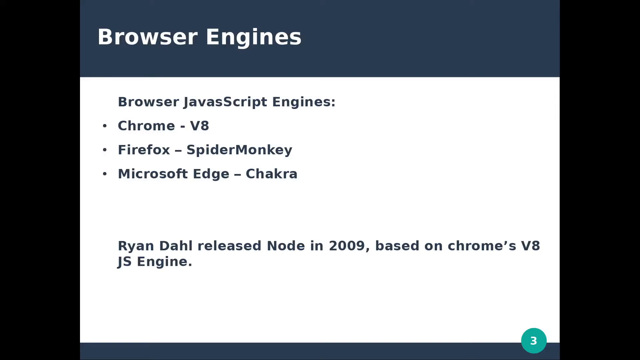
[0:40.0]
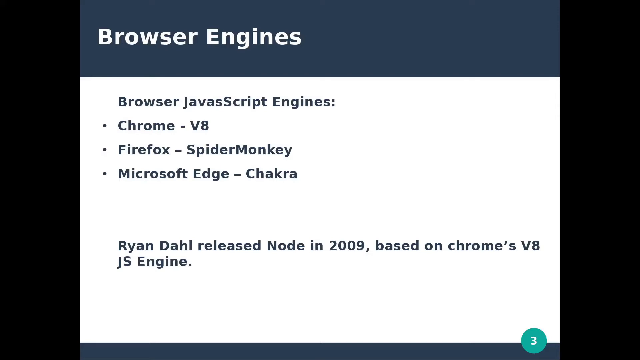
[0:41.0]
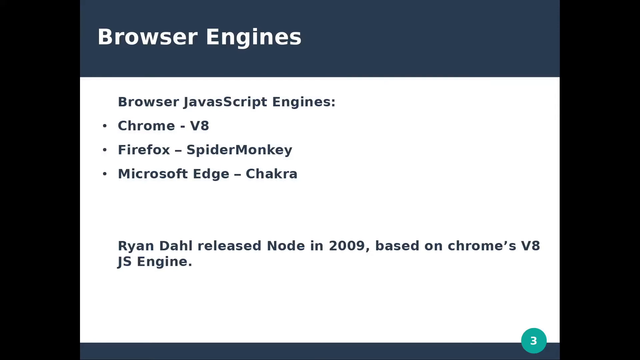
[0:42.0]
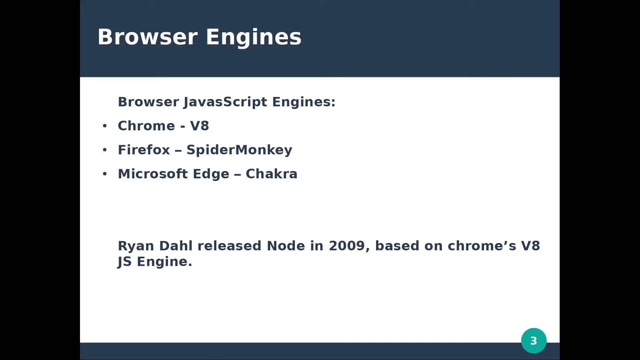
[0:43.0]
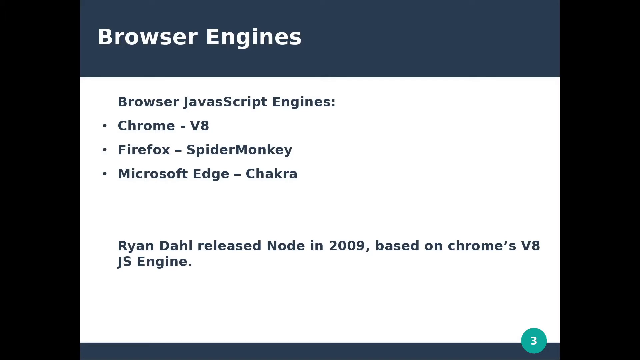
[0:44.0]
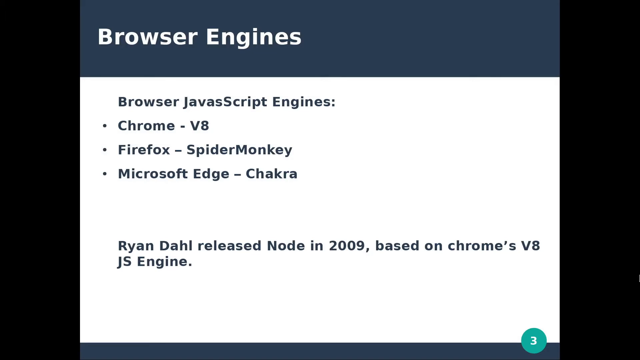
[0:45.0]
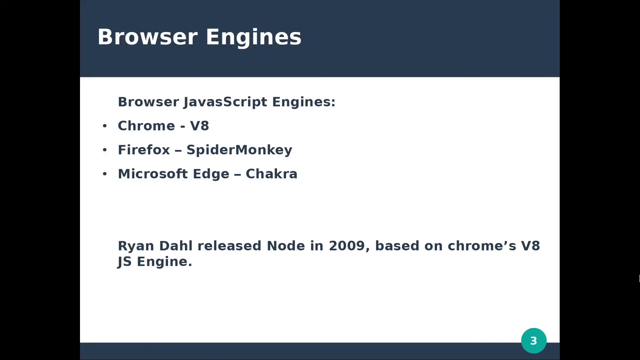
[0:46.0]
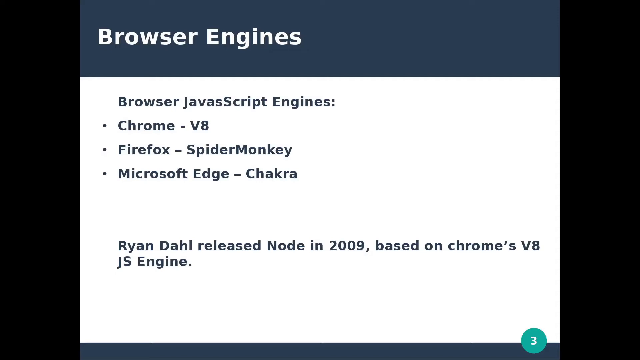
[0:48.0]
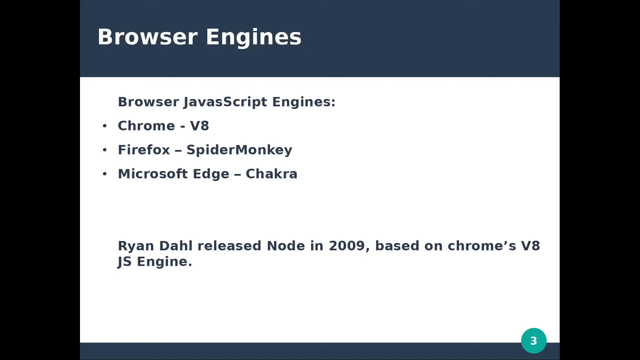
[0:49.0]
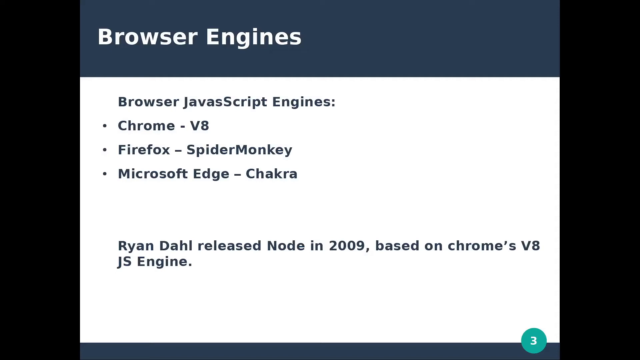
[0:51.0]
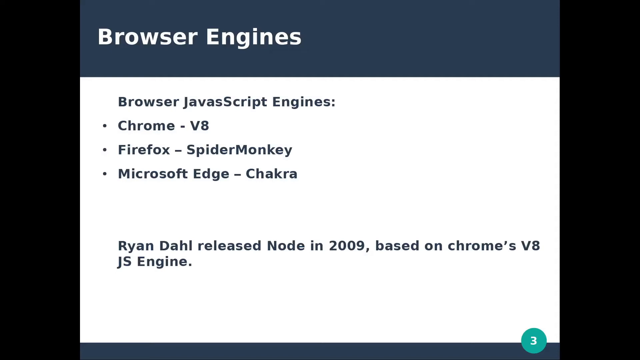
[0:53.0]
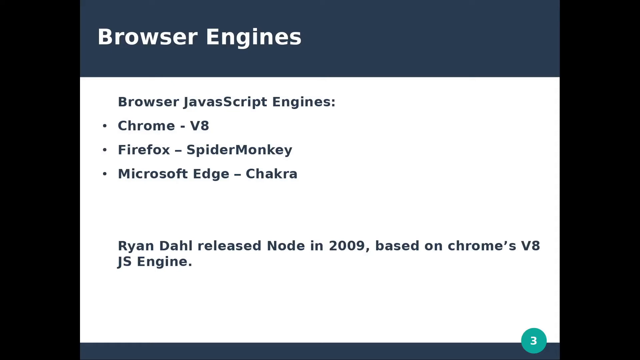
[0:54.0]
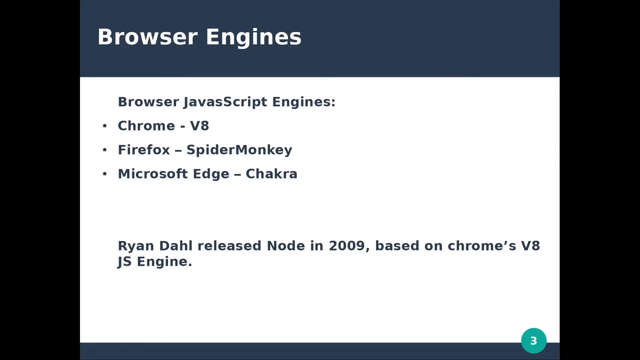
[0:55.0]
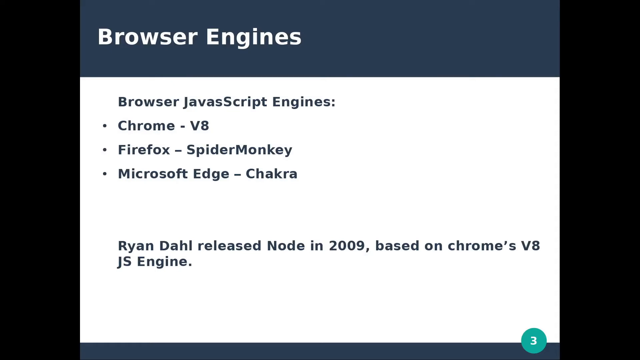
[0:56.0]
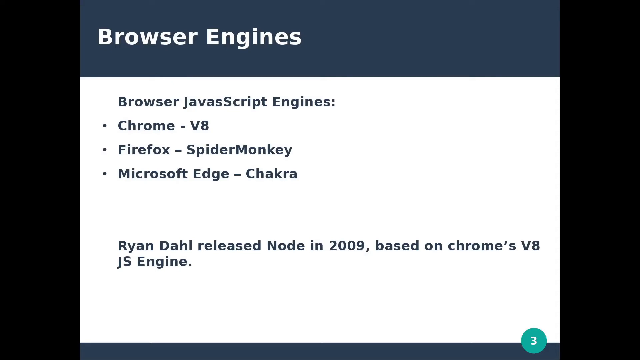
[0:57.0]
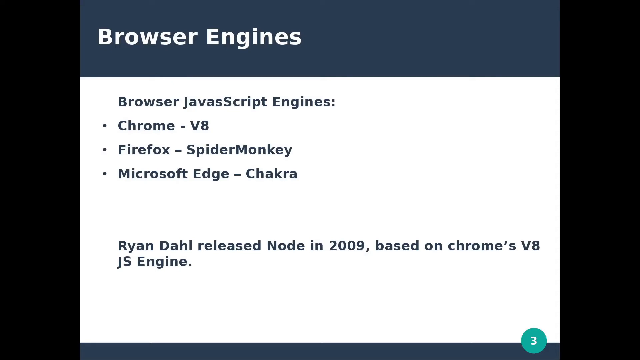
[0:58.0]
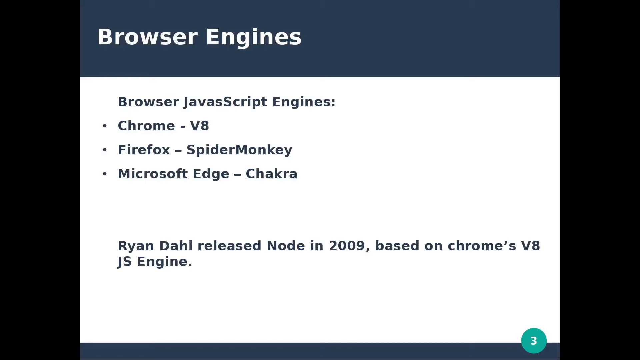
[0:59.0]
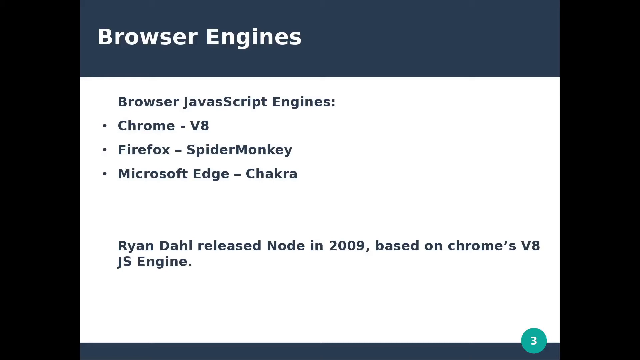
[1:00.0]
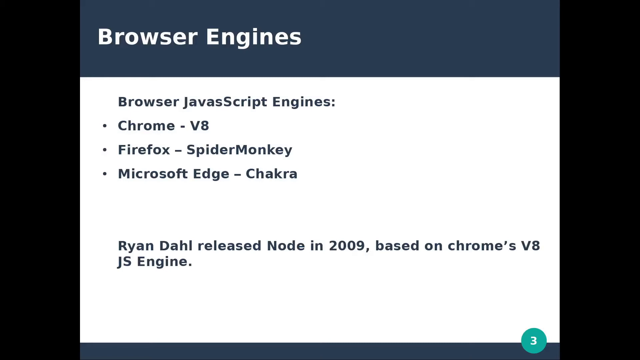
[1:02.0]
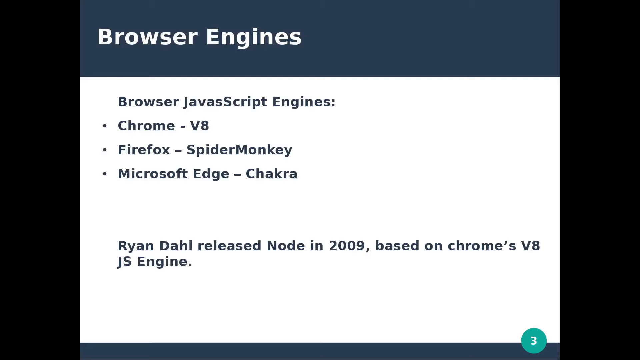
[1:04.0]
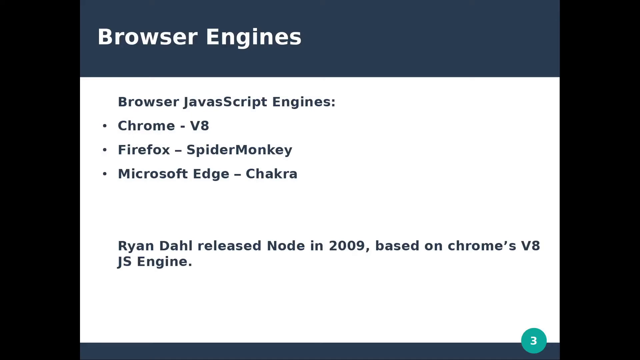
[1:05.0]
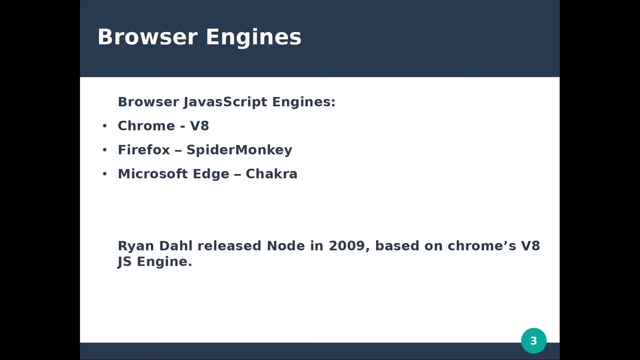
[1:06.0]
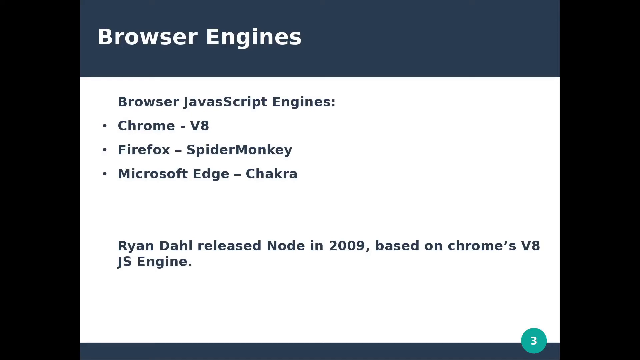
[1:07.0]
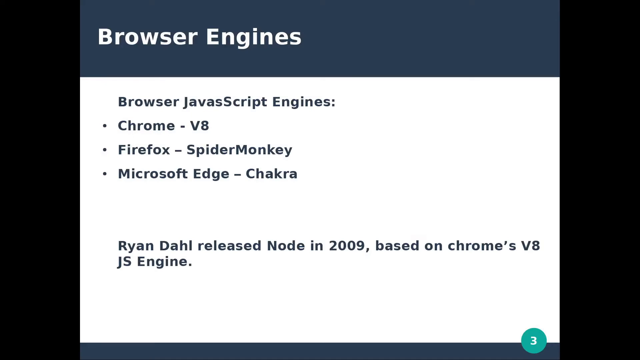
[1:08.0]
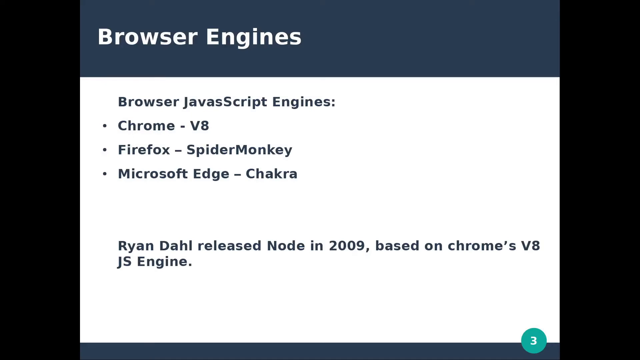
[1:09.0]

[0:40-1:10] The "Browser Engines" screen stays on display. Its text reads "Browser JavaScript Engines: Chrome - V8, Firefox - SpiderMonkey, Microsoft Edge - Chakra", with a subtext reading "Ryan Dahl released Node in 2009 based on Chrome's V8 JS Engine". There are dots to the left of the bullet points. The heading has a blue background, the text area has a white background, and black stripes on either side of the text apparently serve as a border.